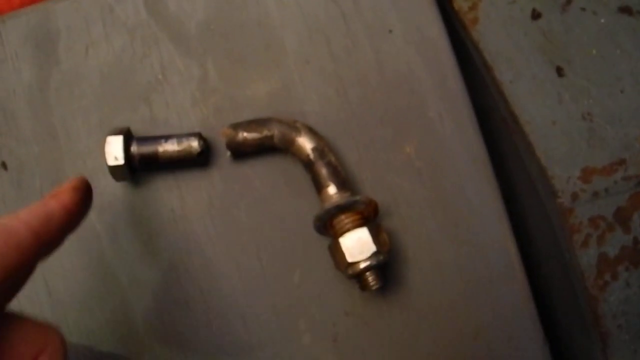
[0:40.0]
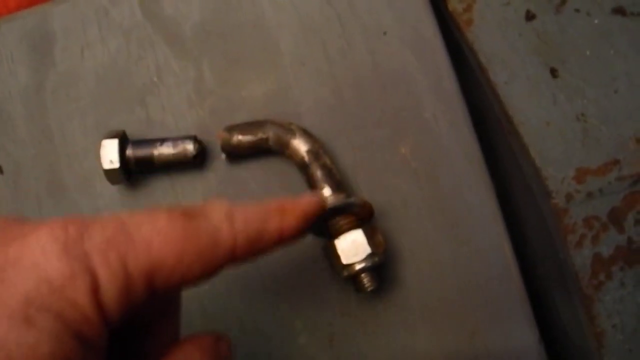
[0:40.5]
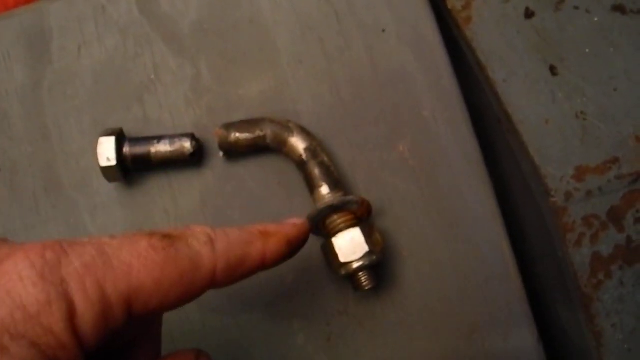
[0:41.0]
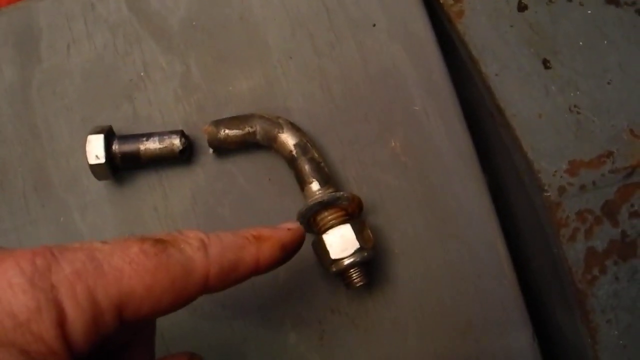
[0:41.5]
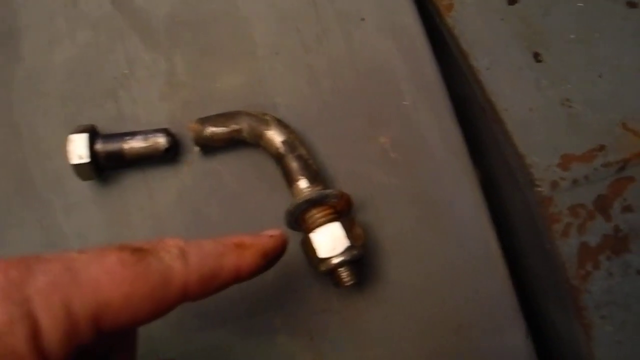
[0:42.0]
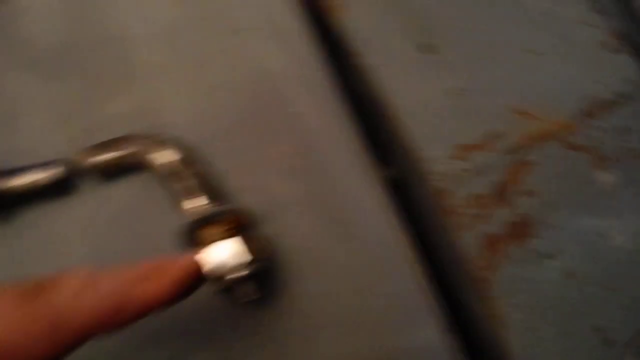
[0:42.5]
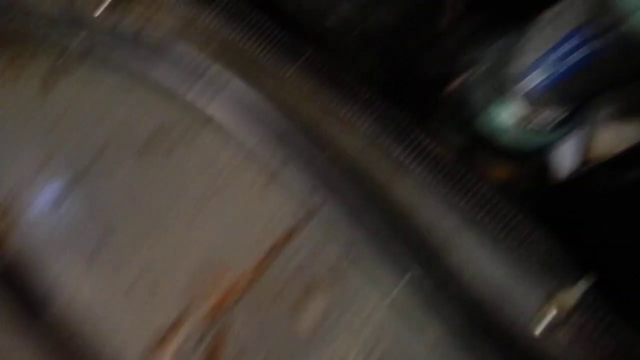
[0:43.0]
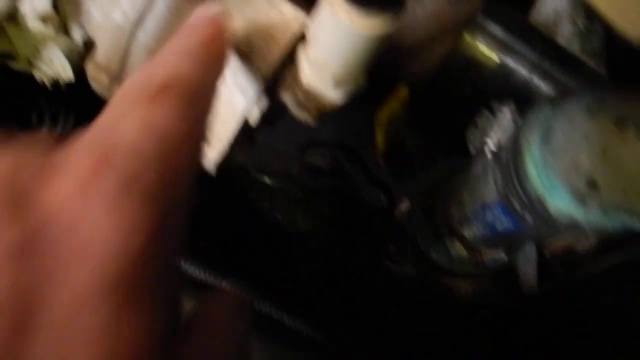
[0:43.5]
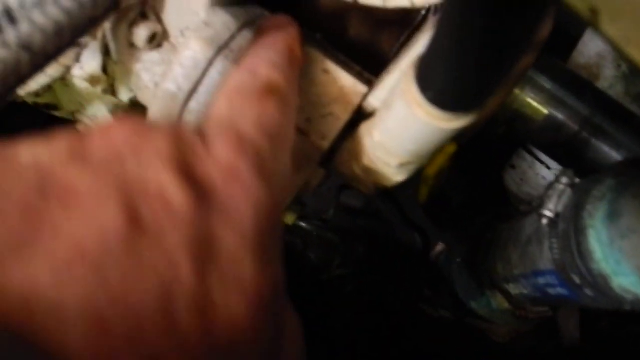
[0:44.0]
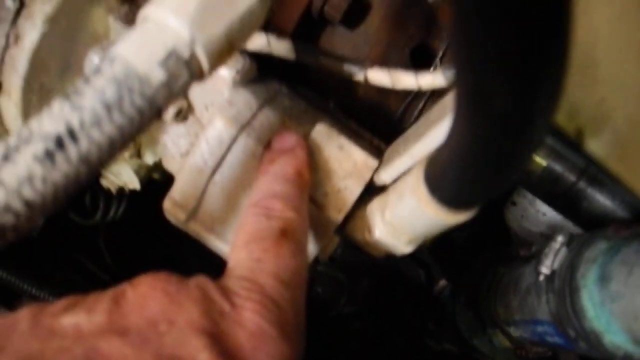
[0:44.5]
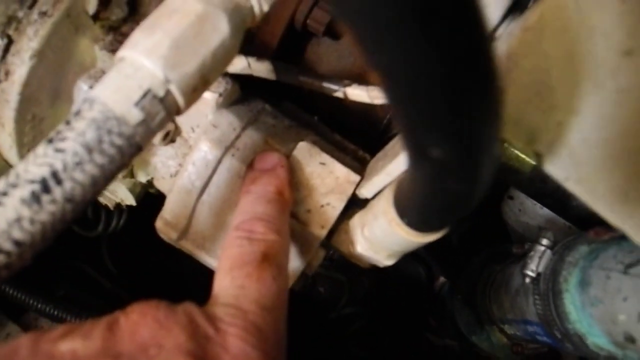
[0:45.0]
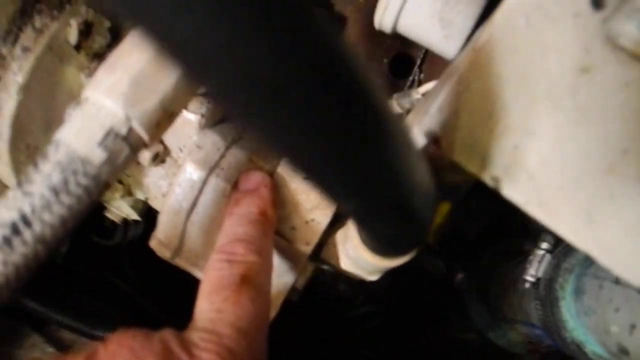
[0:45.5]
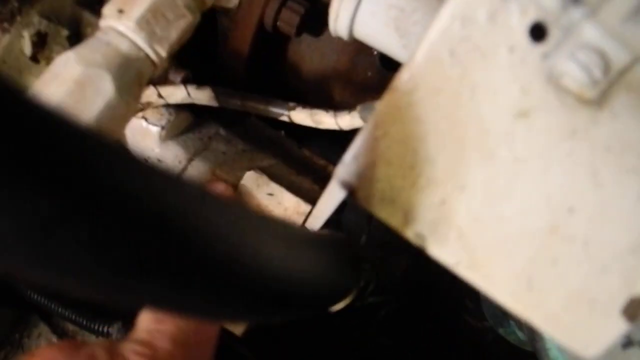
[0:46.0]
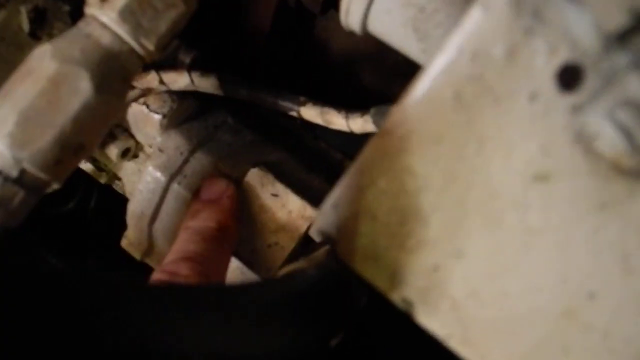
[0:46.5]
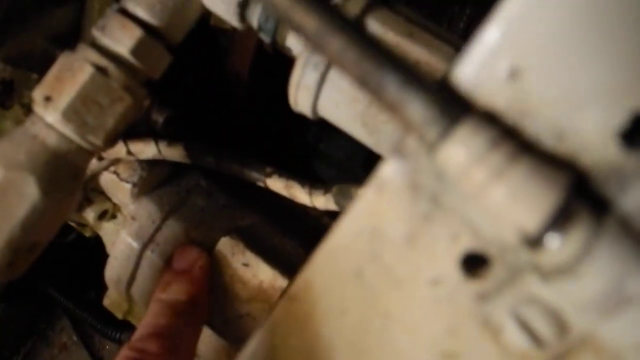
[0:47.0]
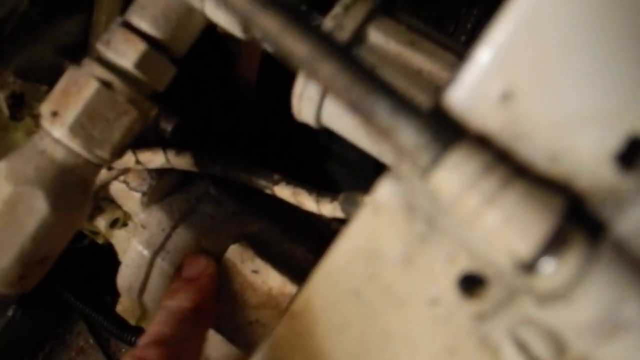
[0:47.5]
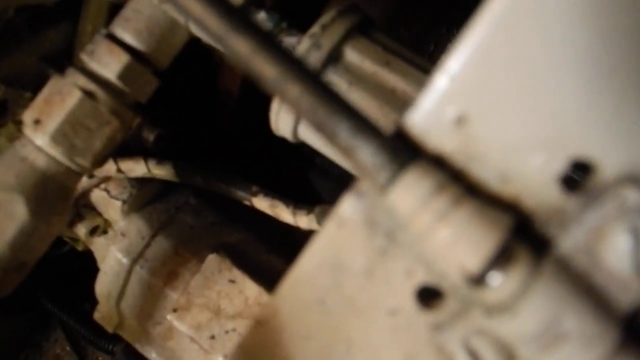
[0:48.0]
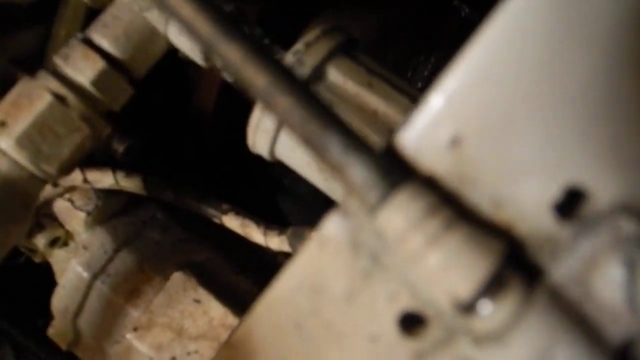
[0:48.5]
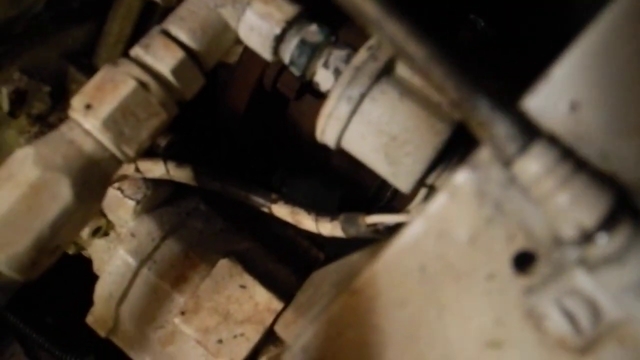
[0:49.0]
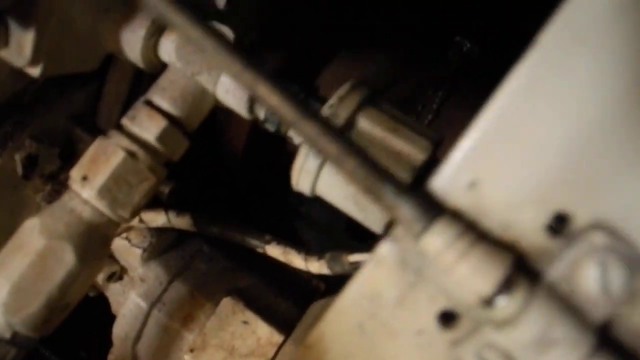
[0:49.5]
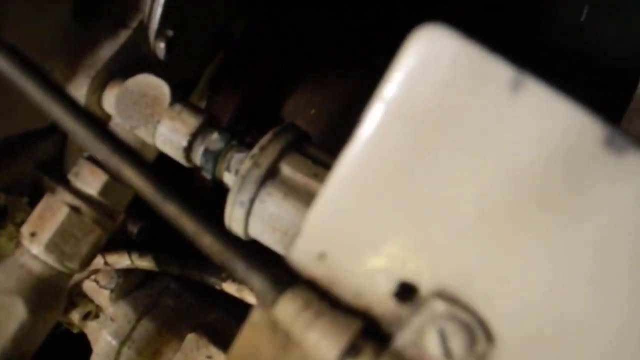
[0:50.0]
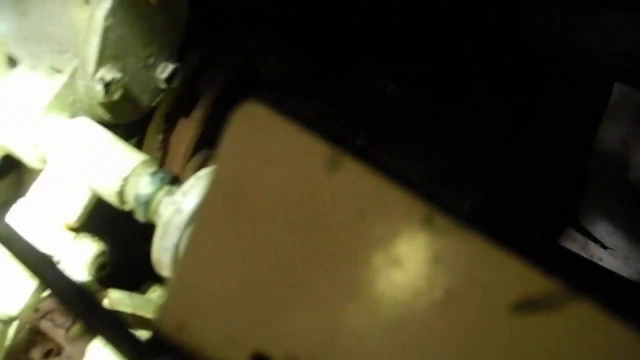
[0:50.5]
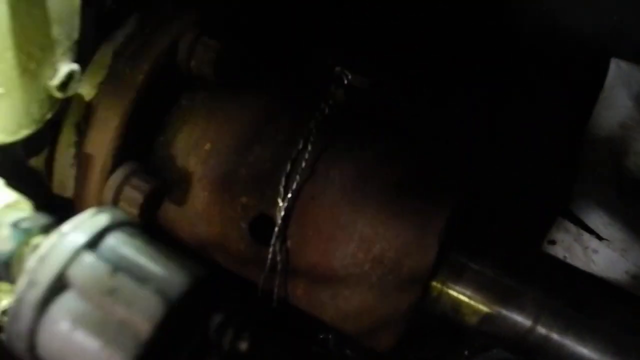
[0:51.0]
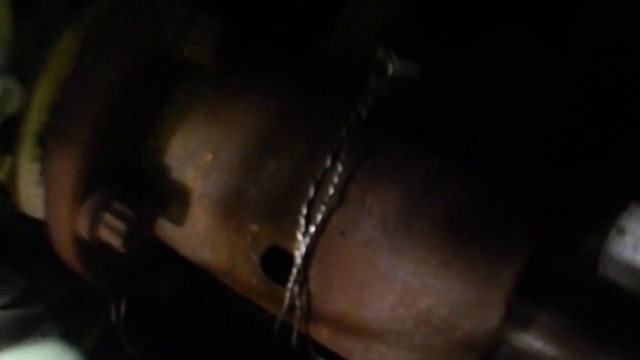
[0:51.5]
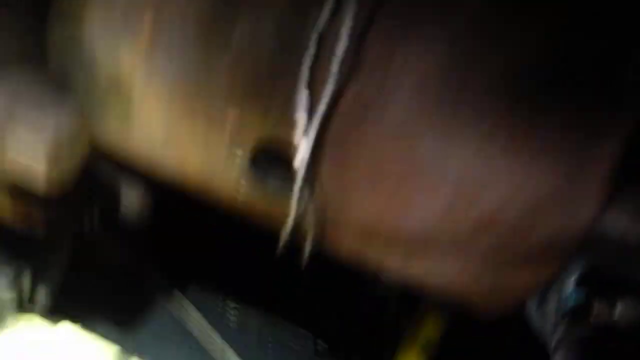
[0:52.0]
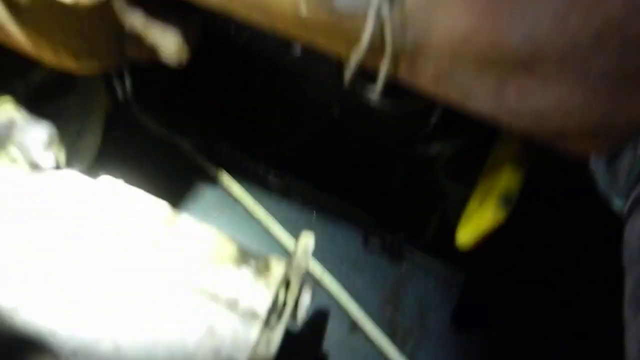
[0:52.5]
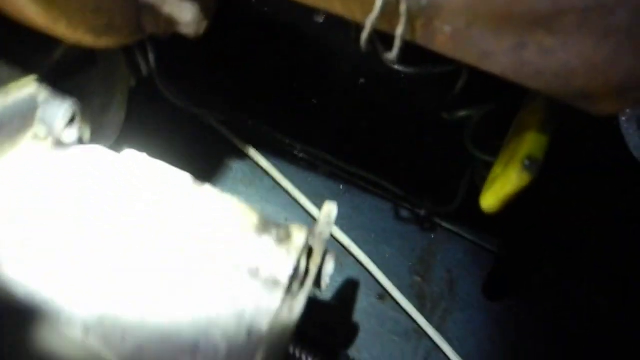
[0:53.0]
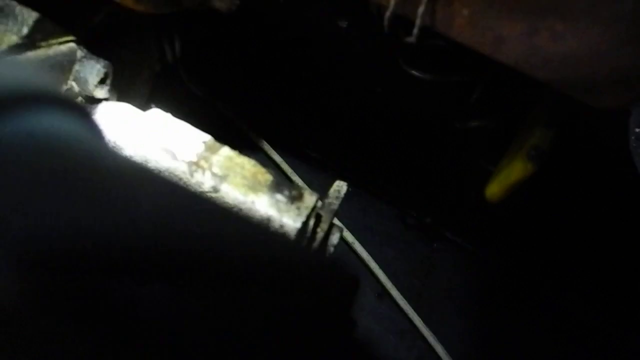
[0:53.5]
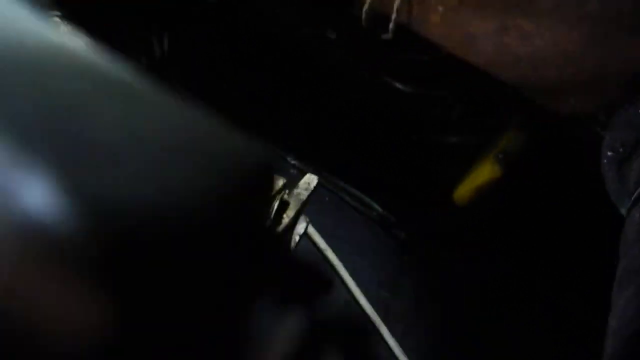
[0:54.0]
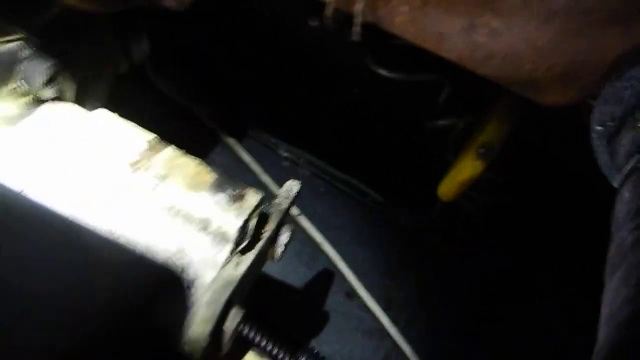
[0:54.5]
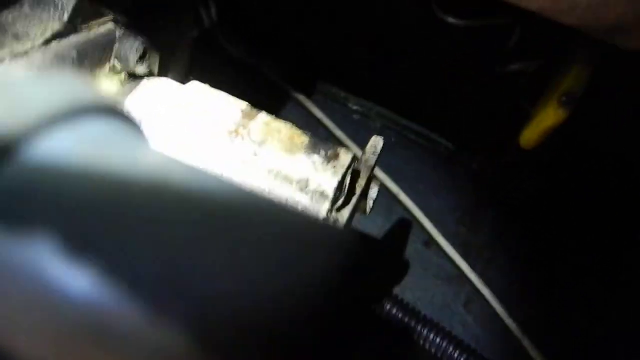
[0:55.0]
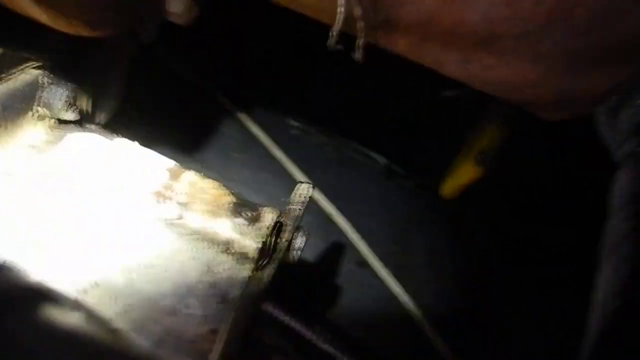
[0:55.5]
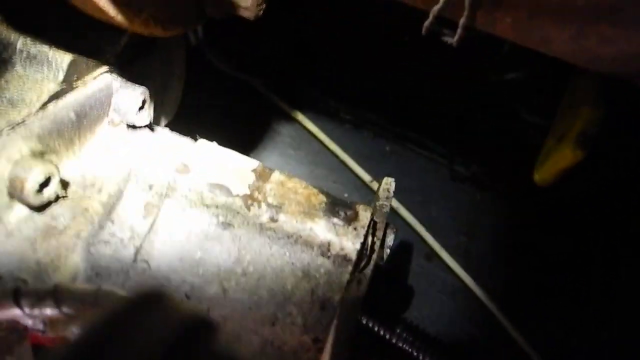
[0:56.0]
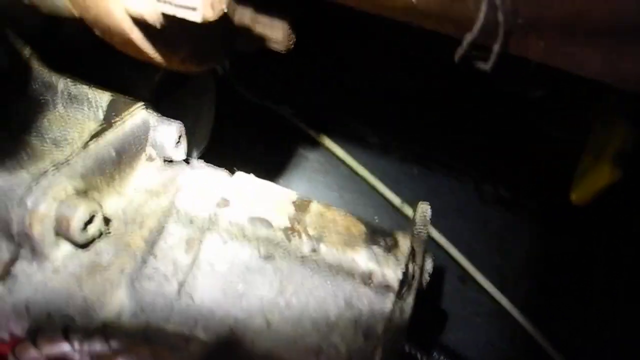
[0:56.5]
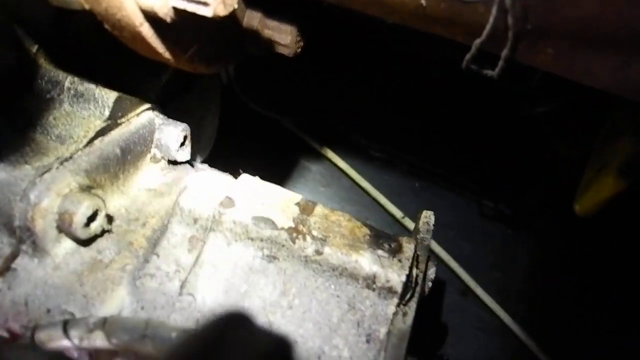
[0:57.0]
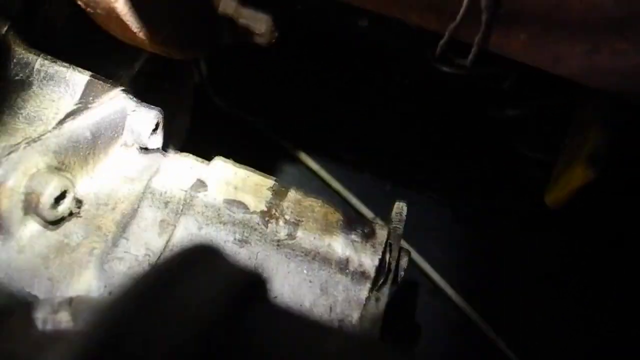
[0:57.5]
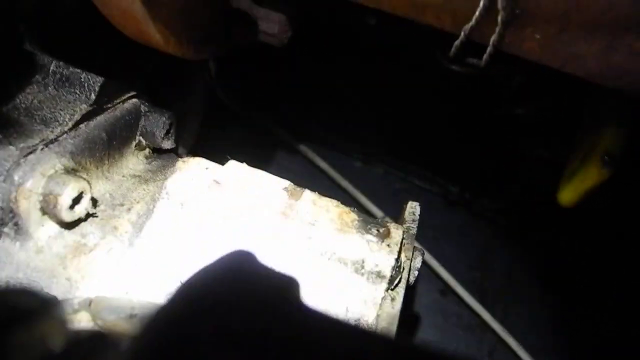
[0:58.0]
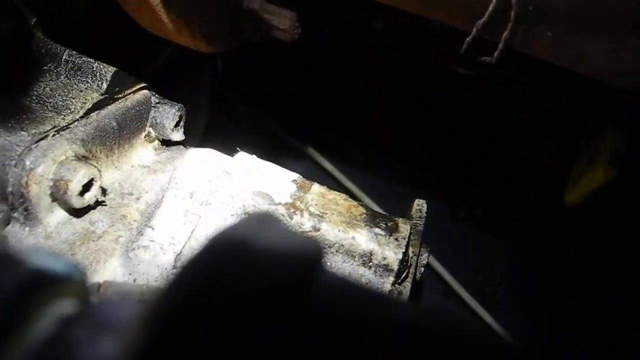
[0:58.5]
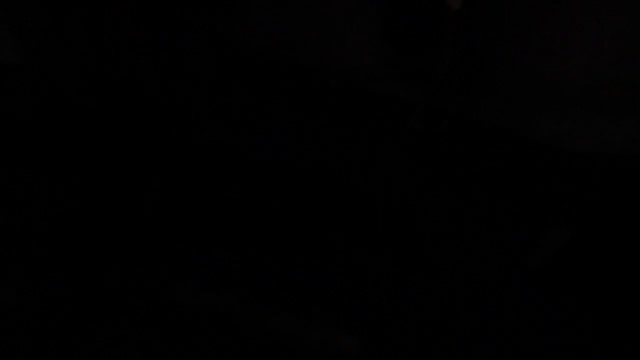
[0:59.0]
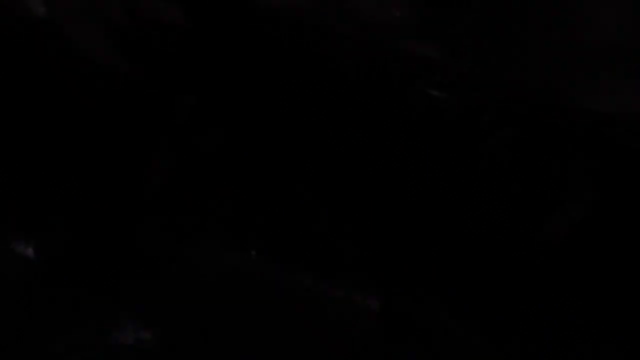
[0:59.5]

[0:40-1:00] A bolt lies on a gray surface. To the right of it is another bolt that looks like a backward 7, with a nut at the end of it, and a nut is on the bottom middle of the screen. From the bottom left of the screen, a person's left index finger points at the bolt, then runs across the bolt and down the backward 7. The camera pans to the inside of the engine, or motor, where there is a white metal piece that sort of looks like an alternator or something, and the finger of the person's left hand touches it. The camera pans up, looking down into the engine part, and a light shines from the left side of the screen down at the engine. The camera is very shaky and shows another piece of silver.